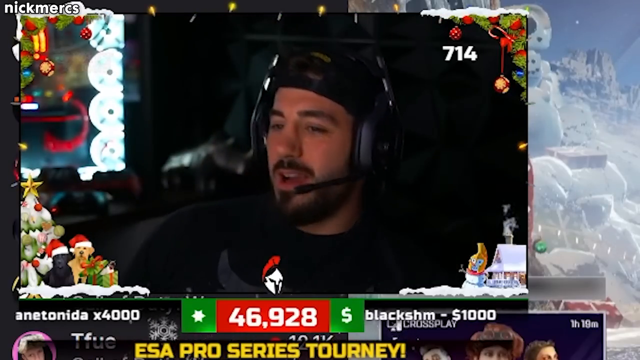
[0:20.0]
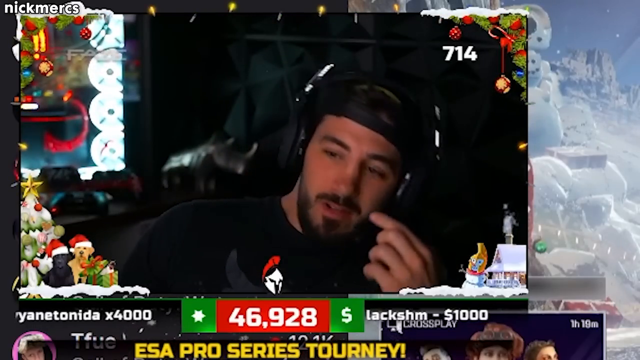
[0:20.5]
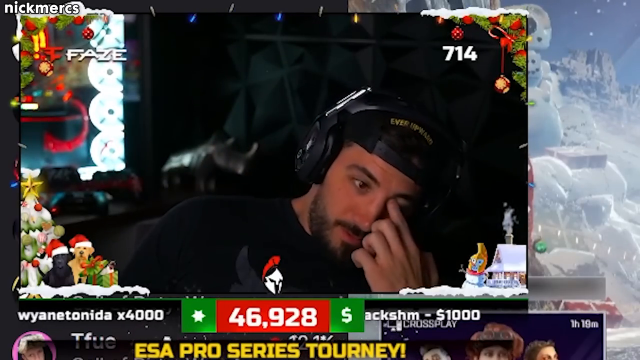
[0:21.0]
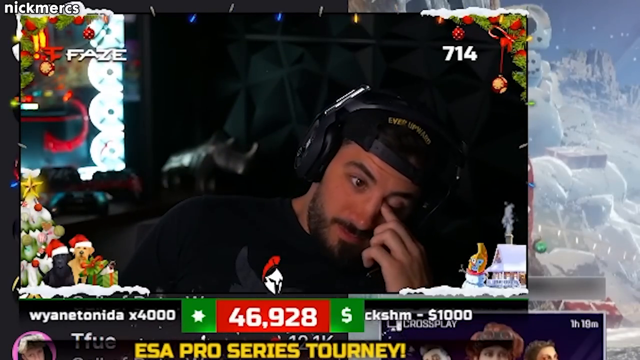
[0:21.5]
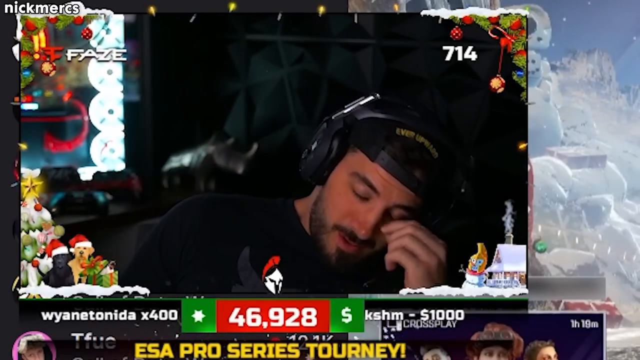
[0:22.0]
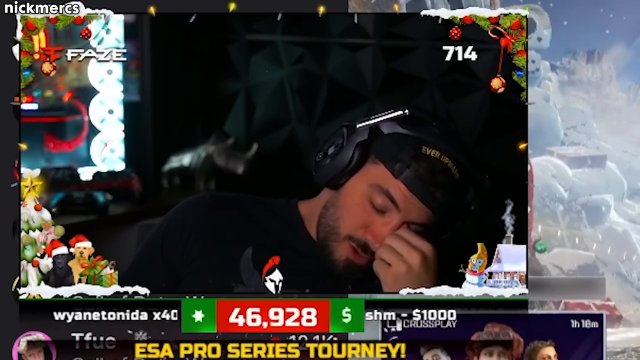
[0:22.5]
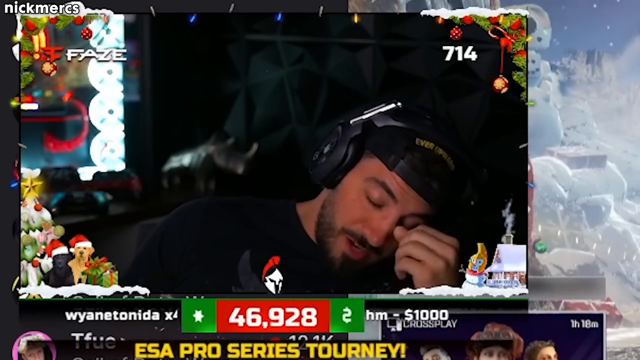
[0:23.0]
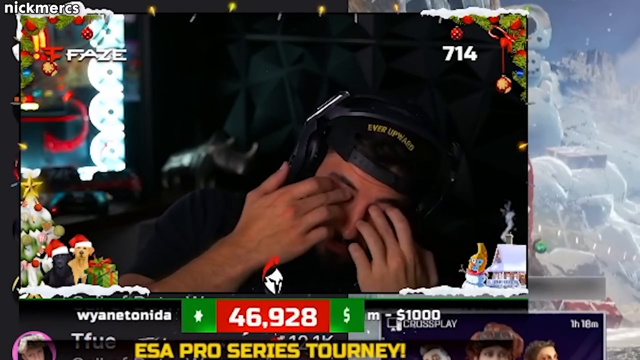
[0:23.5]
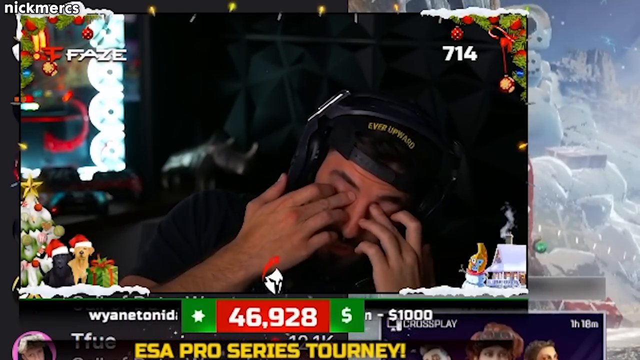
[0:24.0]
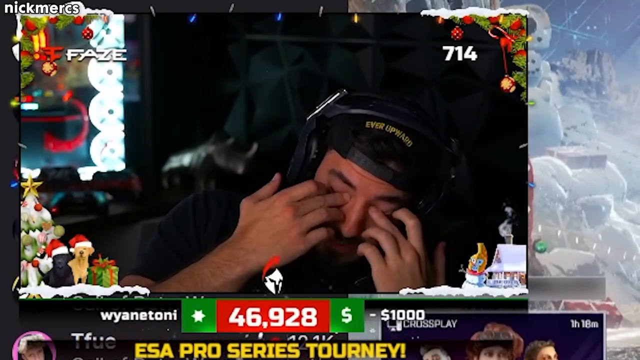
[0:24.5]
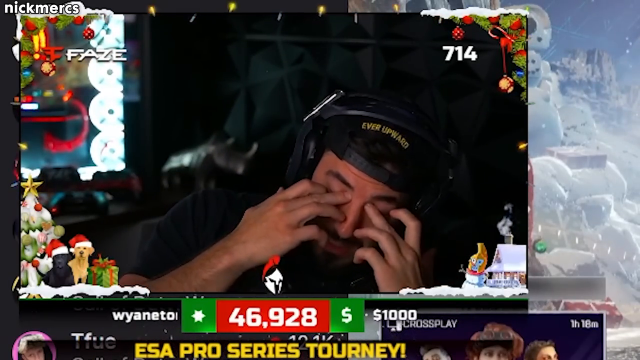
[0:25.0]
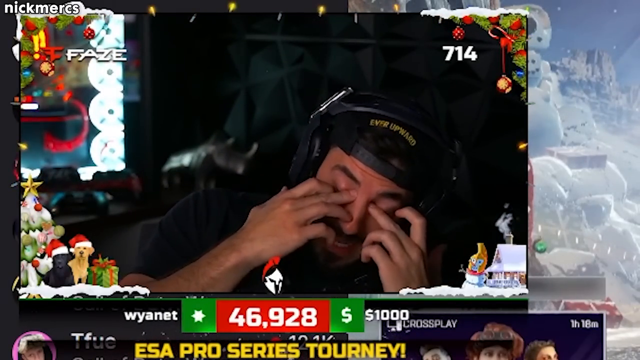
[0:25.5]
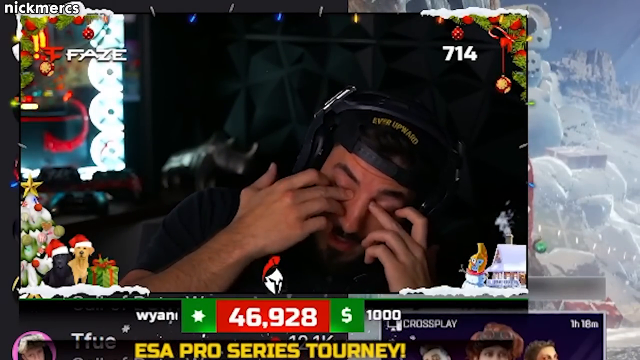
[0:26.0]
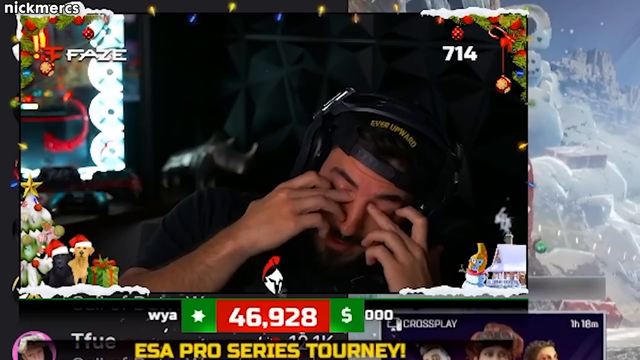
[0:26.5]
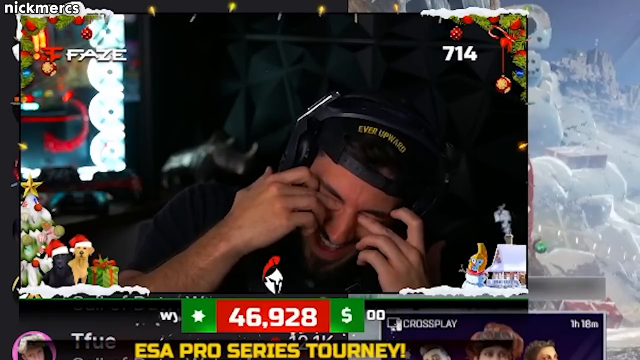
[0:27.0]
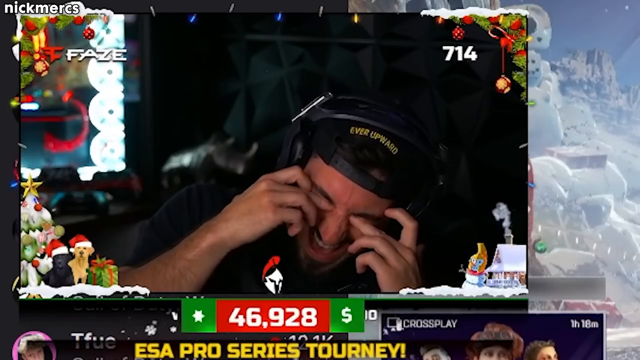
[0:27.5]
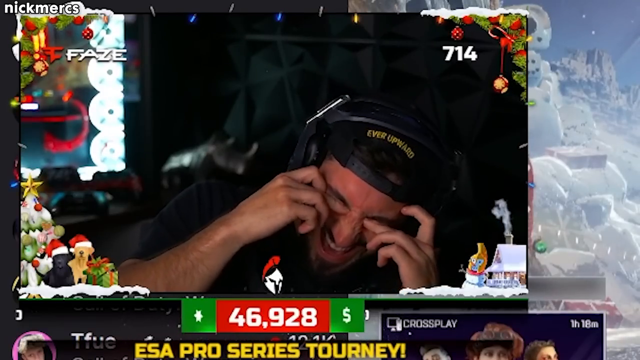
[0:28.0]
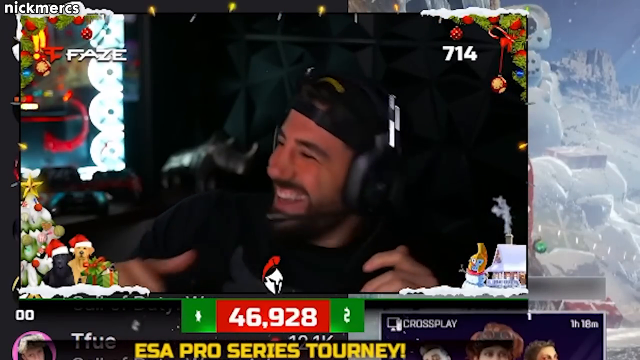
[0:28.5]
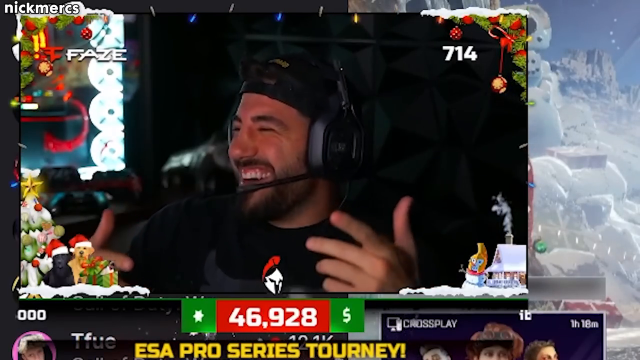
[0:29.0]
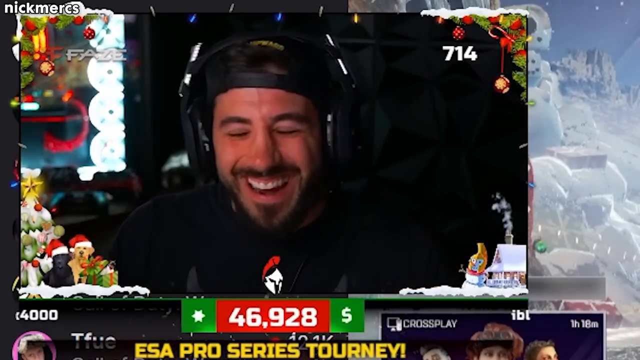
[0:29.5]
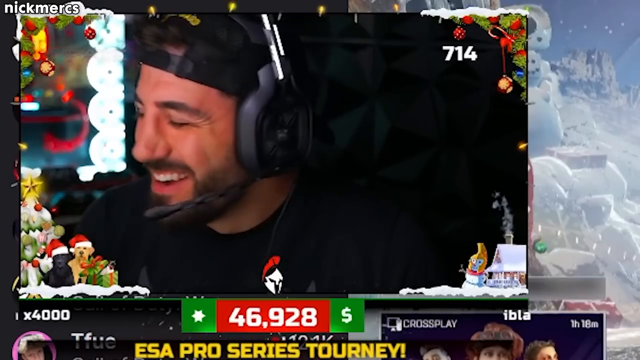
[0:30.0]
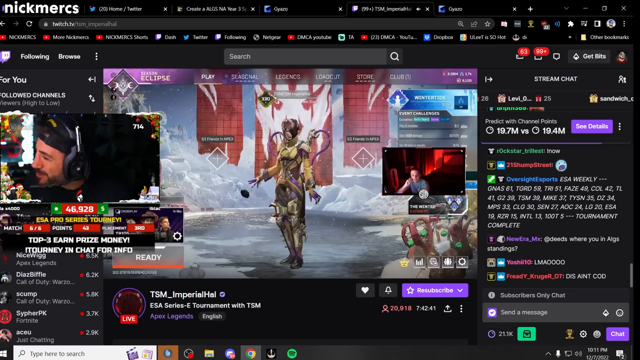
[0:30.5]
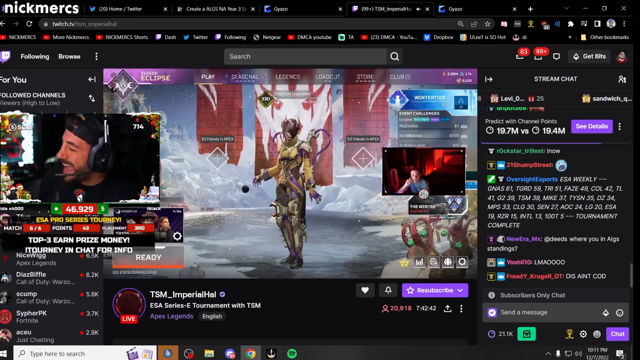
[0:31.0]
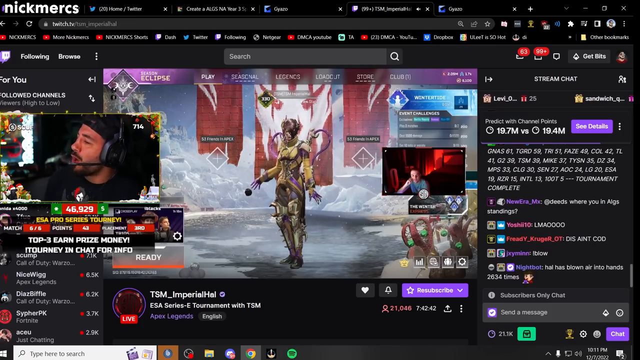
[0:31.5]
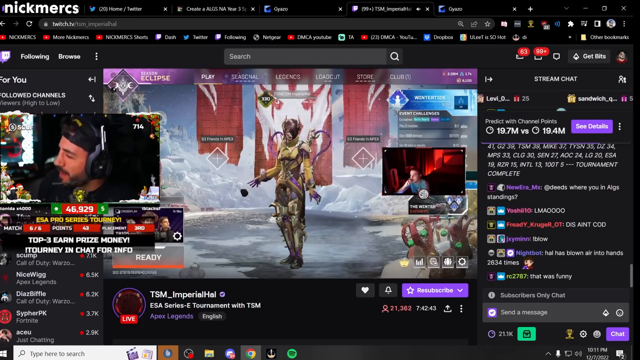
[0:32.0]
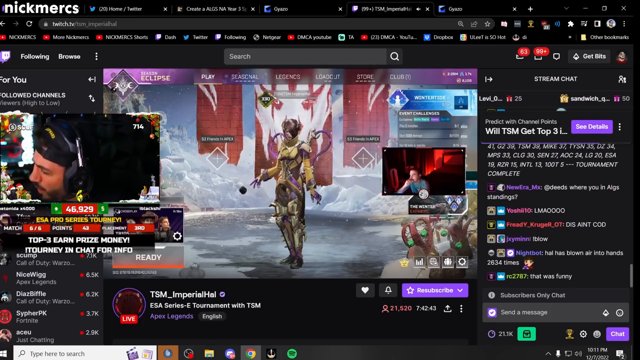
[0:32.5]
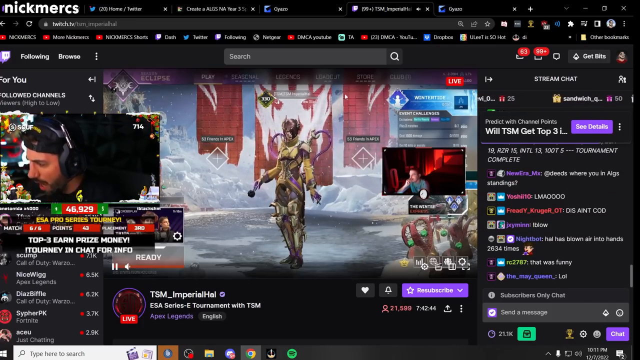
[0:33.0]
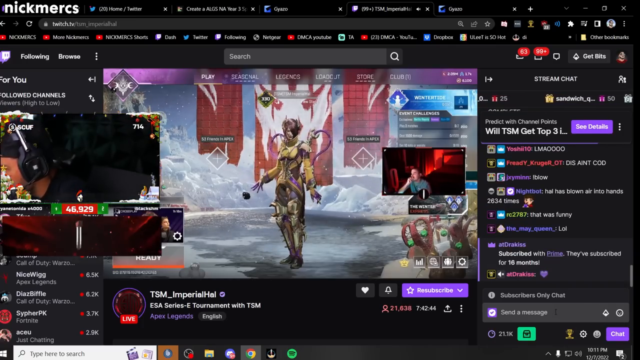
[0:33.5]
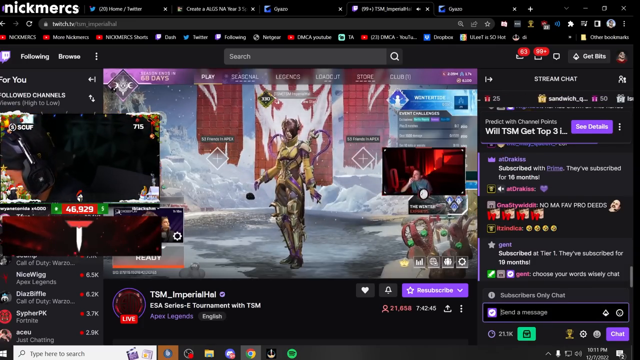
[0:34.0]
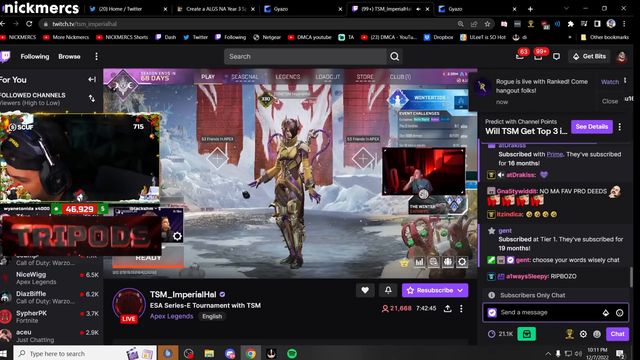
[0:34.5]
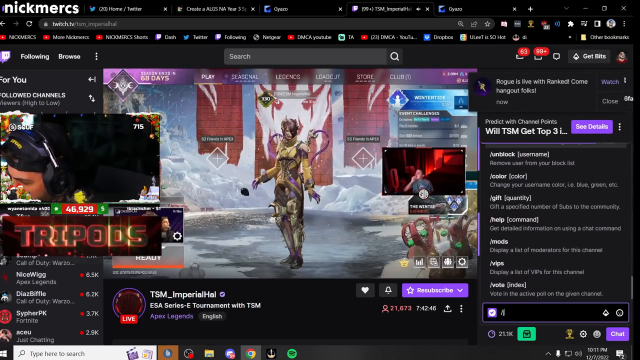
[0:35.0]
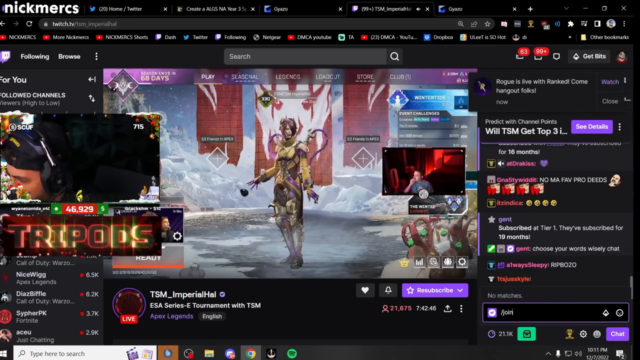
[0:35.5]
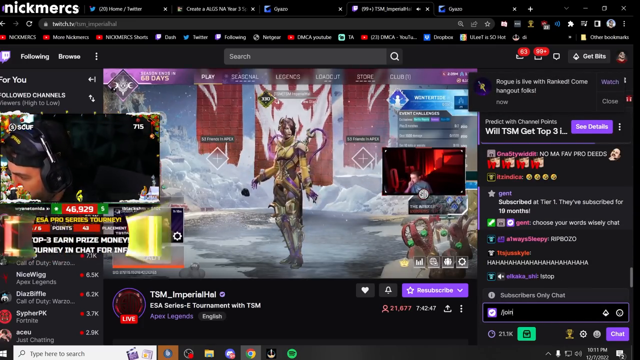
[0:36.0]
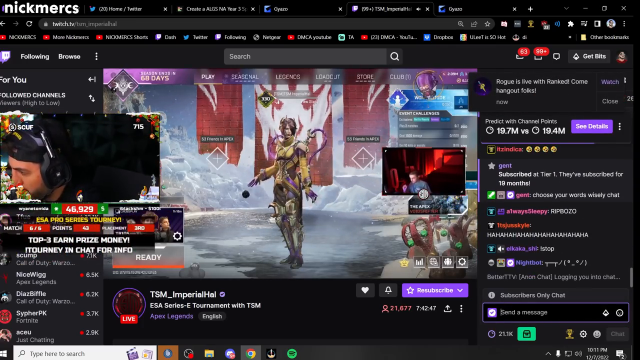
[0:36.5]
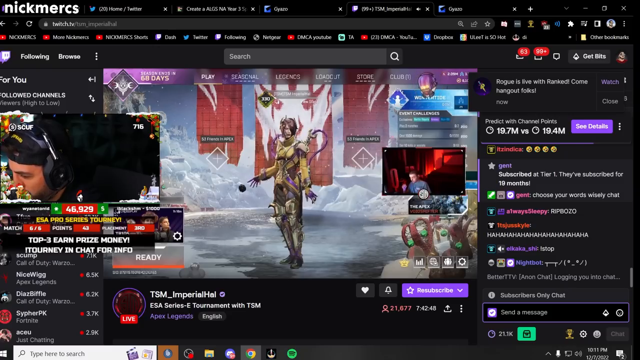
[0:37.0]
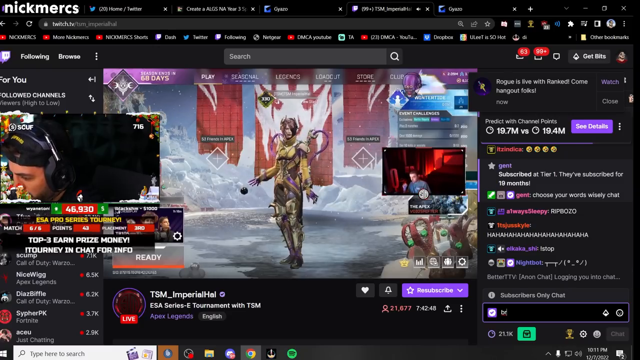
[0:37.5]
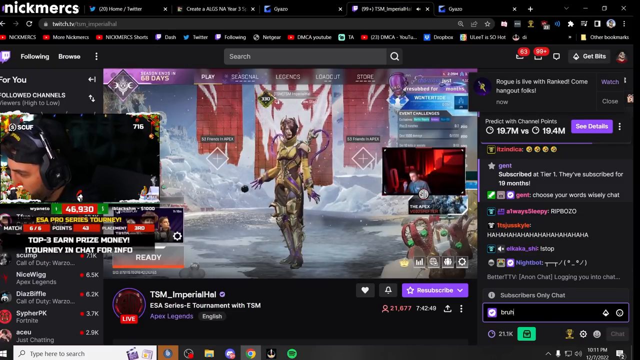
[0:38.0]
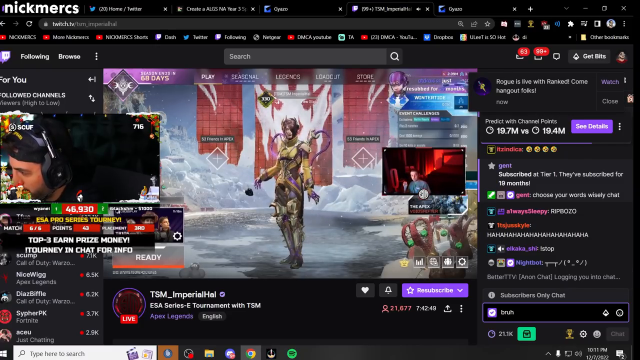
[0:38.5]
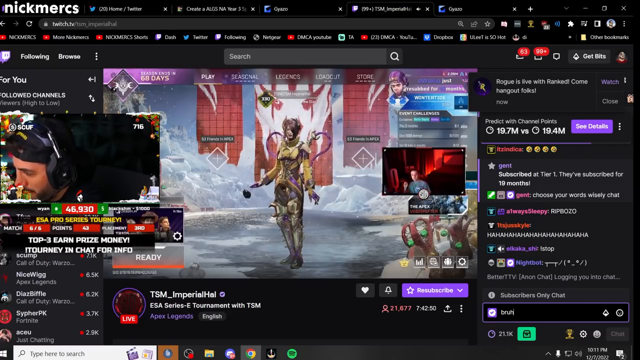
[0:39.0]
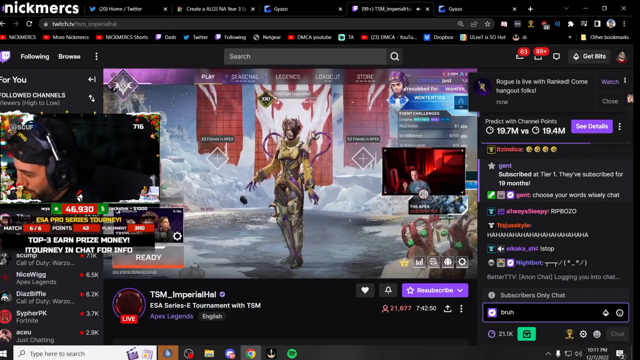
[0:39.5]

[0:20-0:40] A close-up shows the face of the Twitch streamer as he rubs underneath his eyes. On screen is the text "ESA Pro Series Tournament" with the number "46,930" on a red background with a green border, showing a star and a dollar sign. The streamer finishes using his middle fingers to scratch his eyes. The view zooms out a bit back to the overall screen. The streamer wears a black backwards hat and large black earphones with a microphone for talking. His video seems to have a border of Christmastime things: a Christmas cottage in the right corner, some mistletoe in the upper right corner, and some dogs in Santa hats next to a Christmas tree and a gift in the bottom left corner. After rubbing his eyes, the streamer starts chuckling as more chat messages come in on the stream.